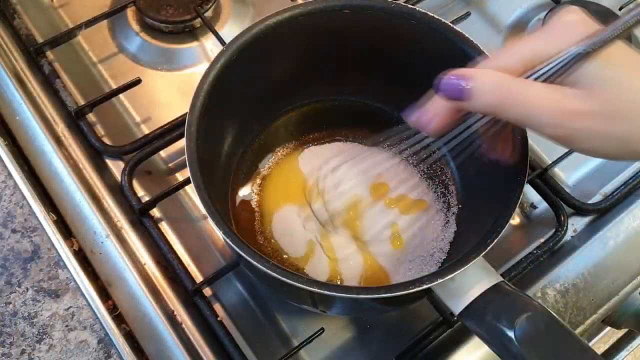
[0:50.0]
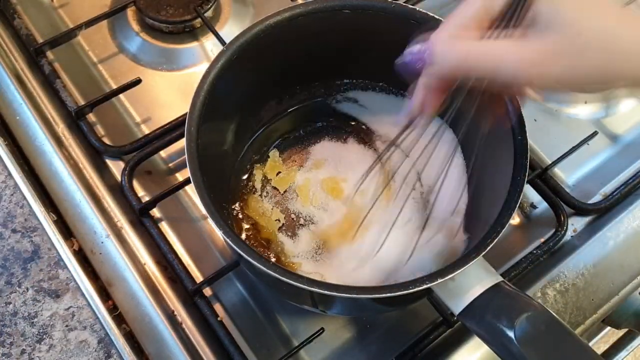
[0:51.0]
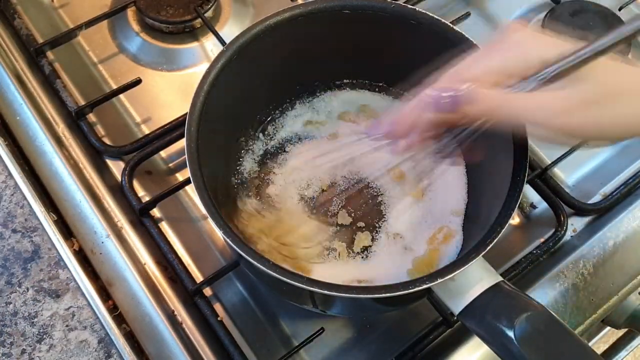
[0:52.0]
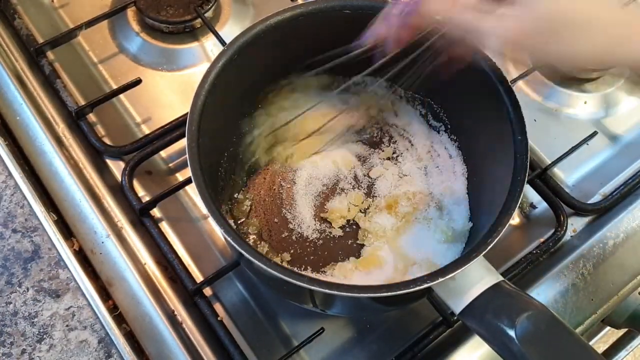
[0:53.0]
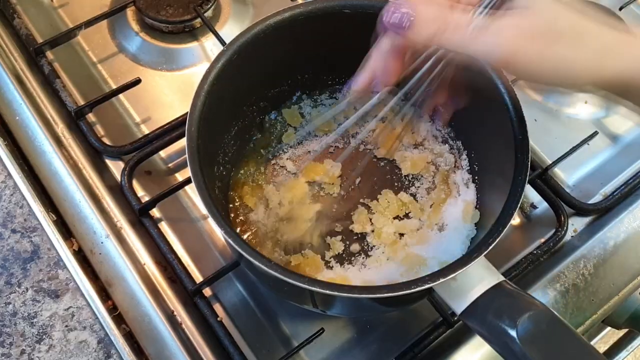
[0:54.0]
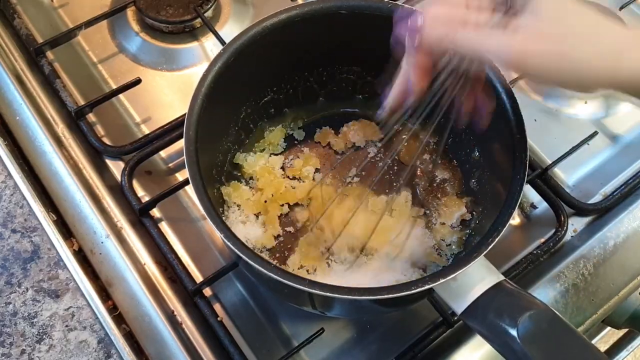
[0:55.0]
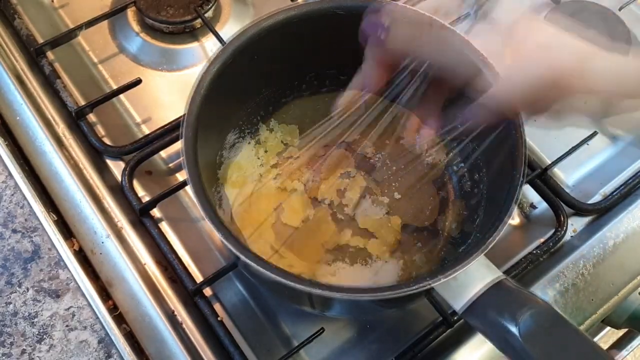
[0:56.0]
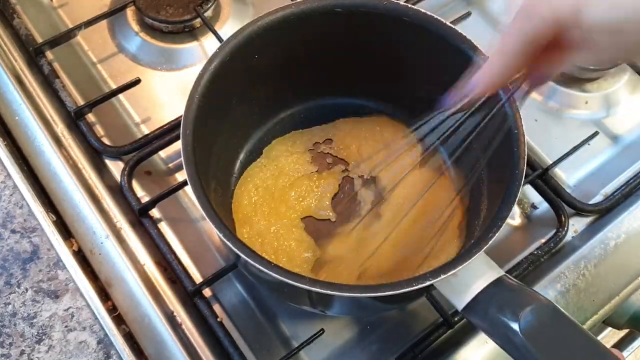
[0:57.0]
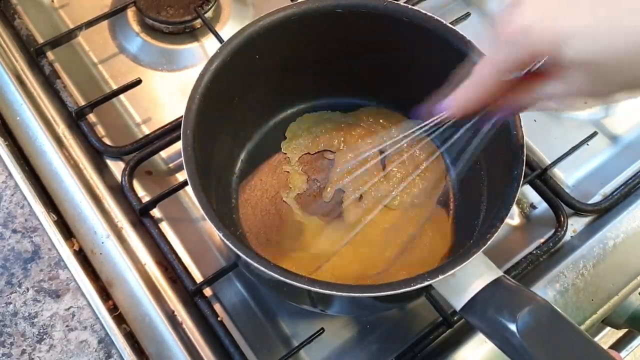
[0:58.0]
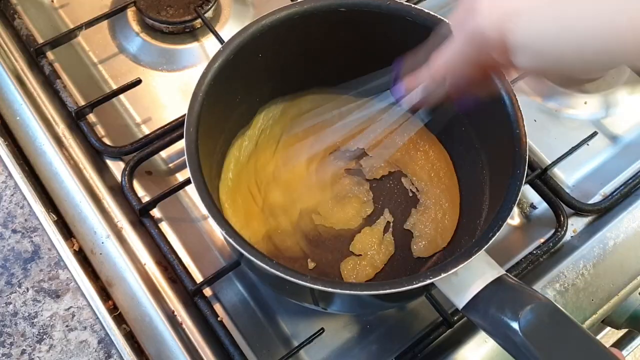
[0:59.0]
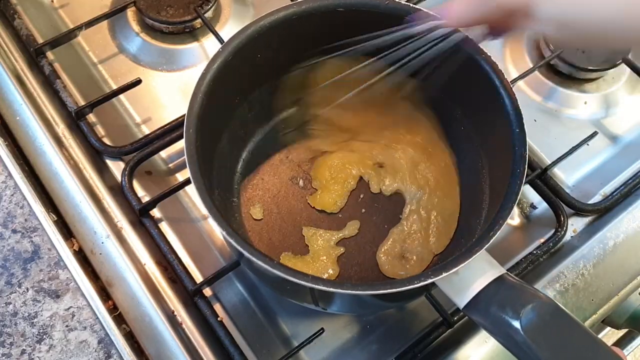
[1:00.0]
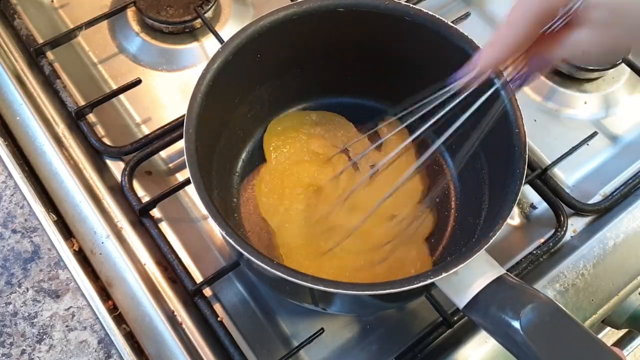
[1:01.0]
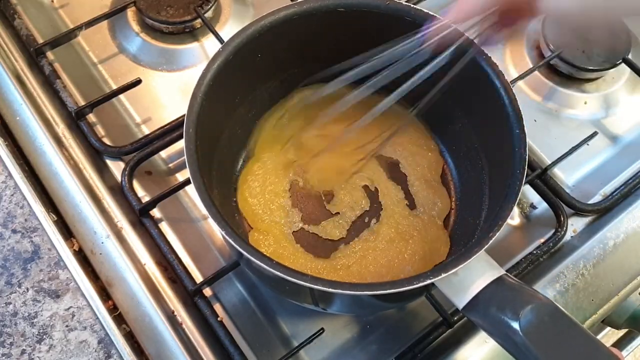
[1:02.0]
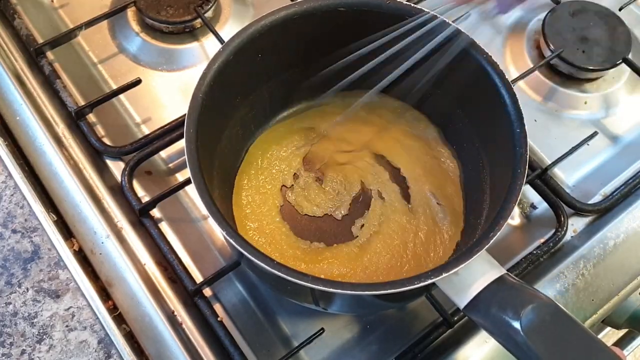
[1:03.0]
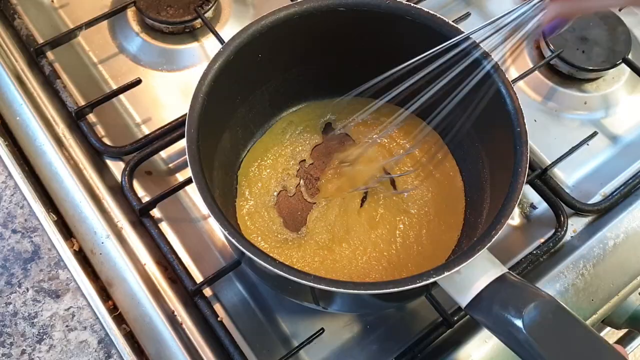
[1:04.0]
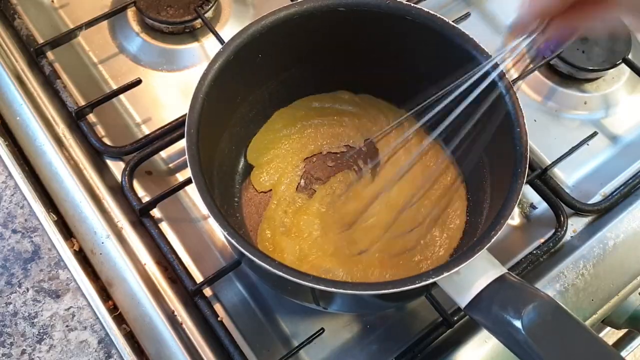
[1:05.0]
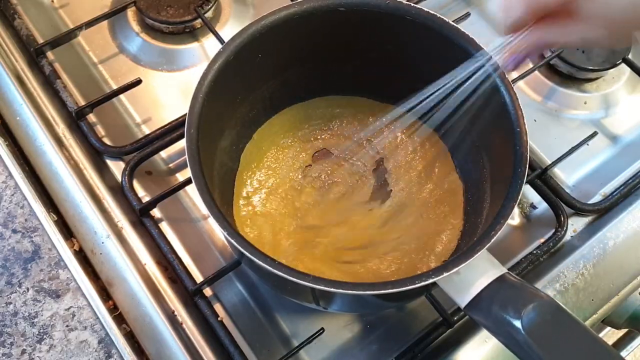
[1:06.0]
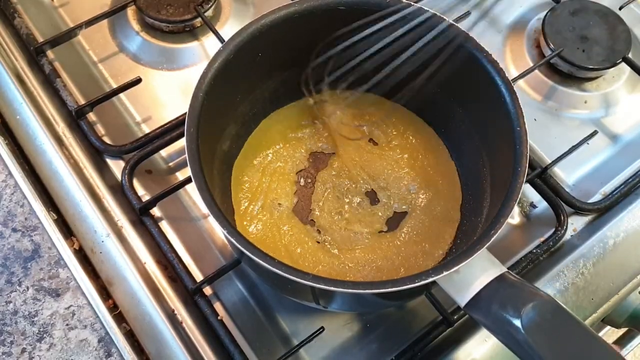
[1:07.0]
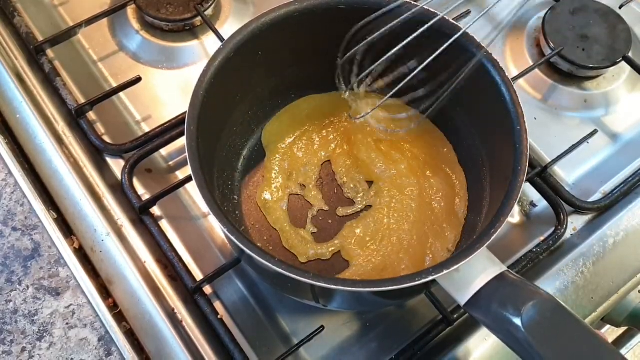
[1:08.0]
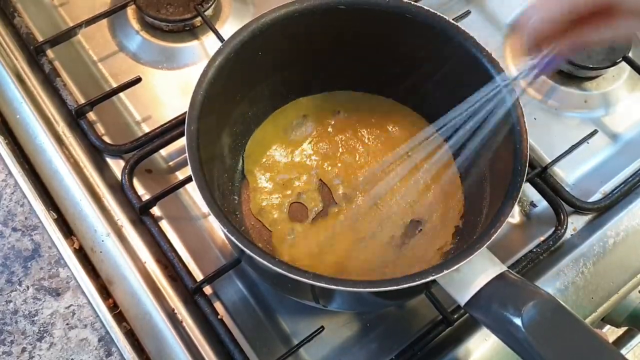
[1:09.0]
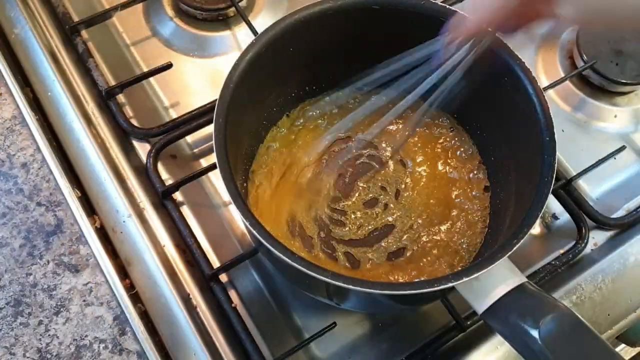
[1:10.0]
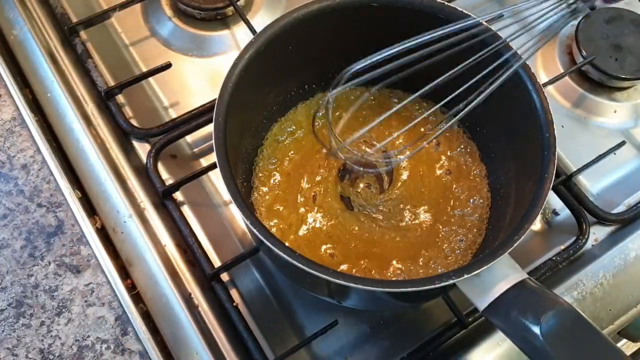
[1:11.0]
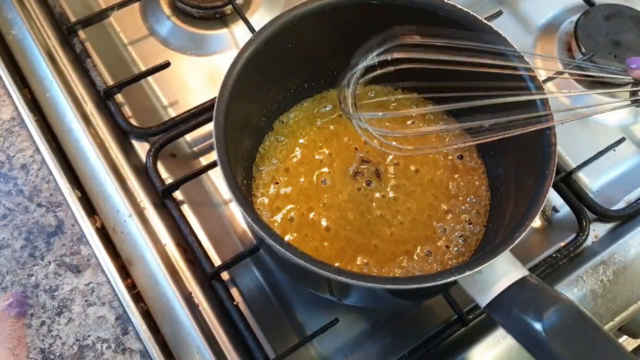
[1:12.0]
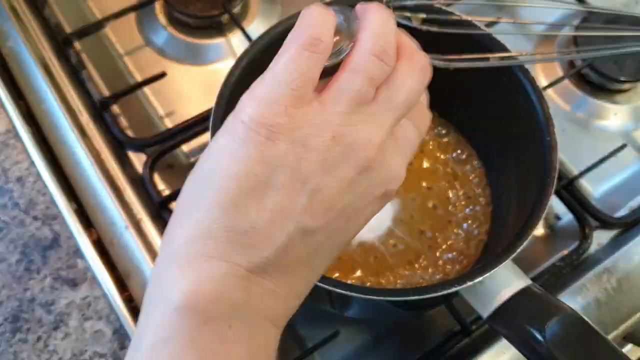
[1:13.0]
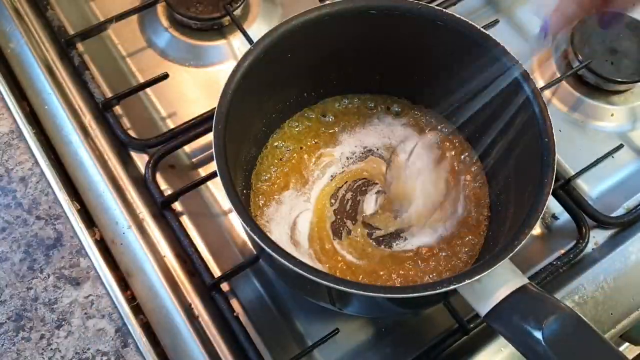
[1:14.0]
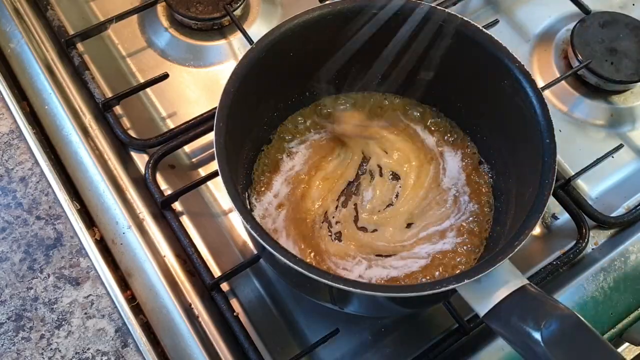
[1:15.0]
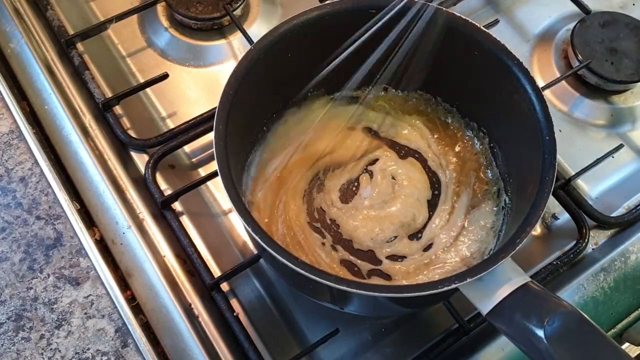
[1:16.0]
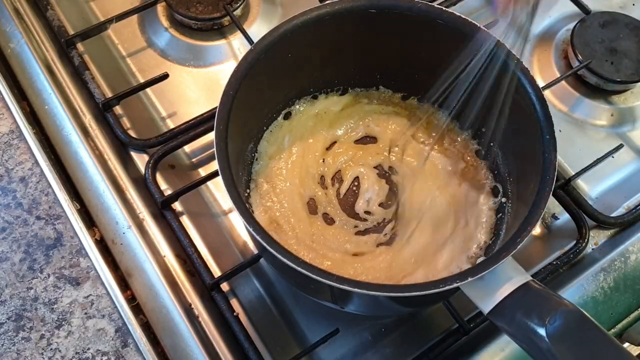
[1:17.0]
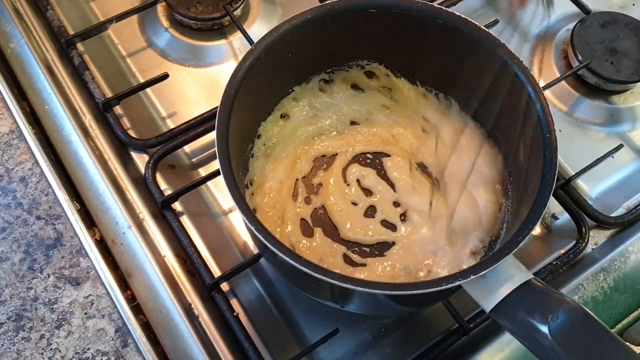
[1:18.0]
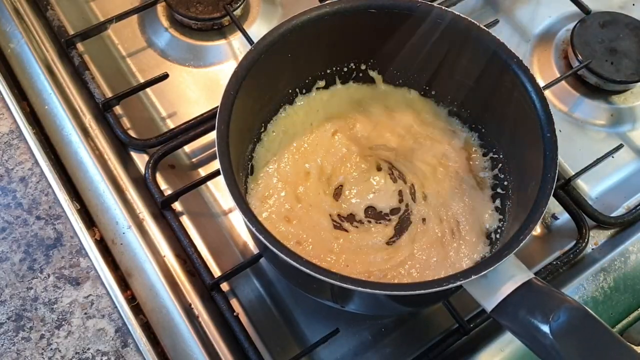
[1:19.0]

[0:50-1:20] A hand in frame uses a metal whisk to mix the ingredient that looks like sugar with the ingredient that looks like honey, slowly whisking them together in the metal pot. After a few seconds they appear to be thoroughly mixed into a sort of applesauce-looking paste that does not stick to the pan at all. The mixing continues for some time until the mixture starts to bubble and darkens in color, looking very sticky and bubbly. The hand then brings a small jar of another ingredient into frame, possibly the baking powder or another white powder ingredient, and pours it into the sticky, bubbly mixture. As it is whisked in thoroughly, the entire mixture lightens to an off-white, almost light tan color. It continues to stick to itself as the whisk moves it around.